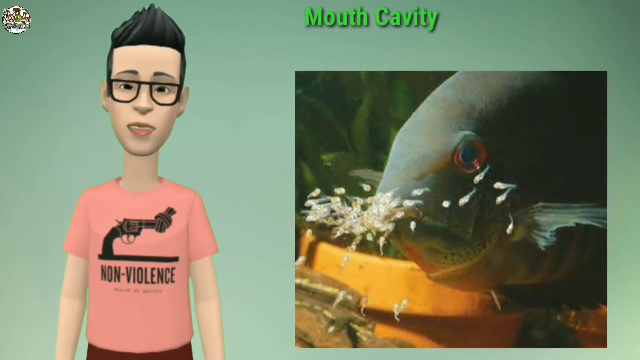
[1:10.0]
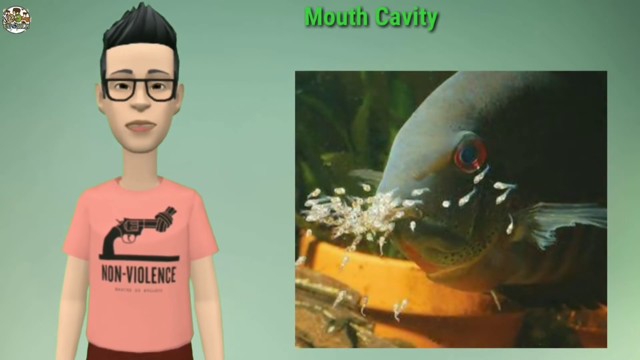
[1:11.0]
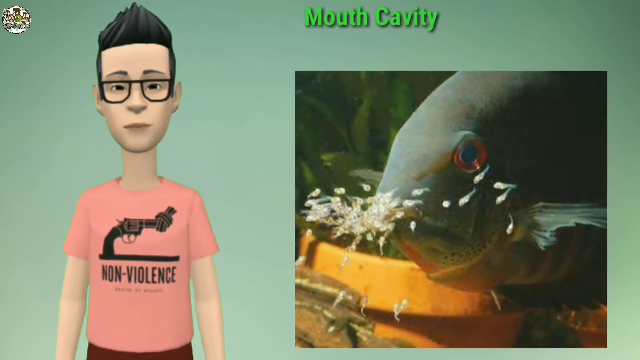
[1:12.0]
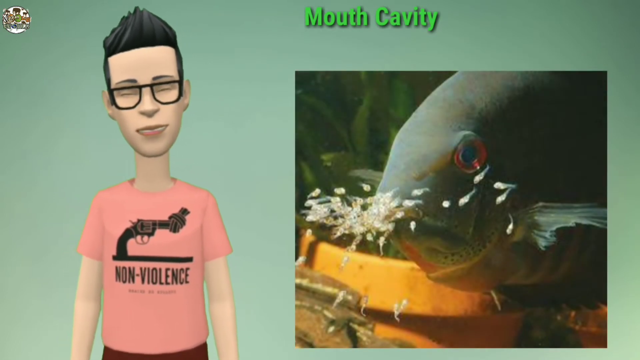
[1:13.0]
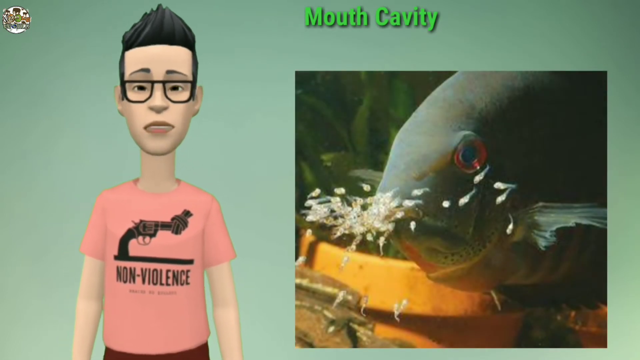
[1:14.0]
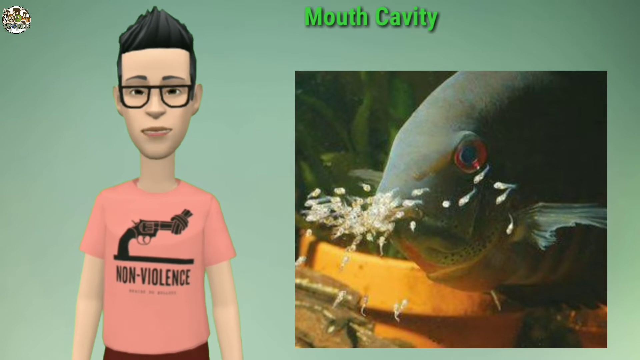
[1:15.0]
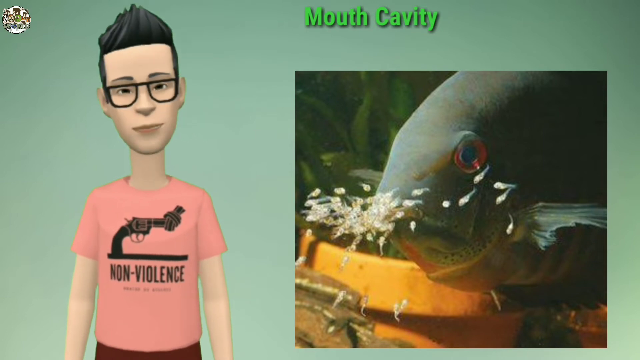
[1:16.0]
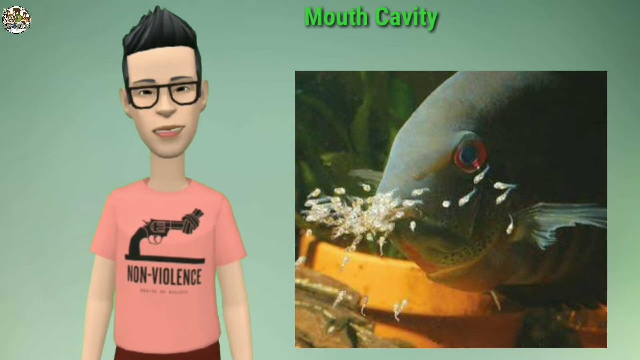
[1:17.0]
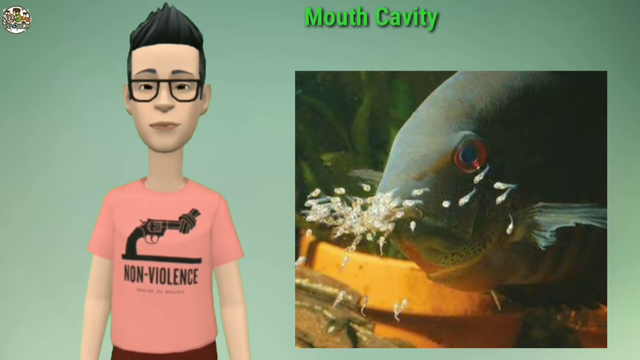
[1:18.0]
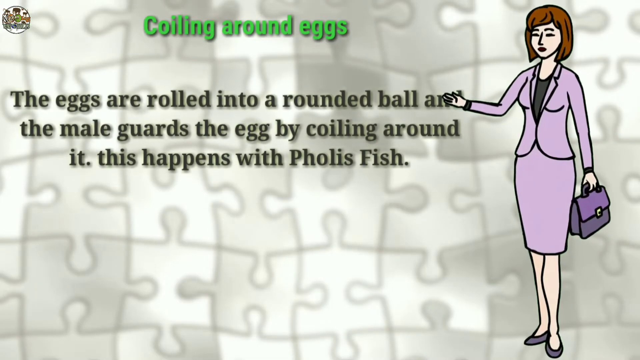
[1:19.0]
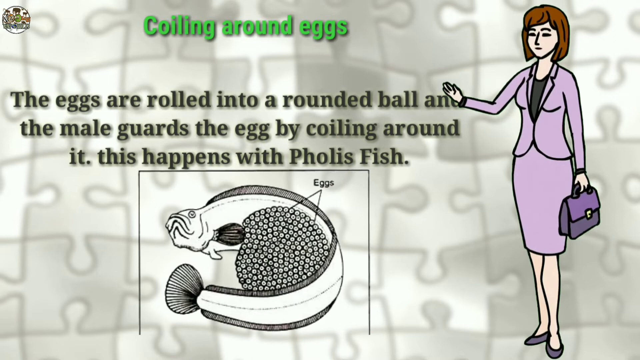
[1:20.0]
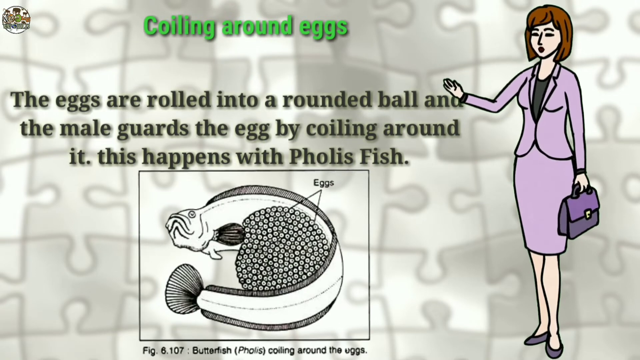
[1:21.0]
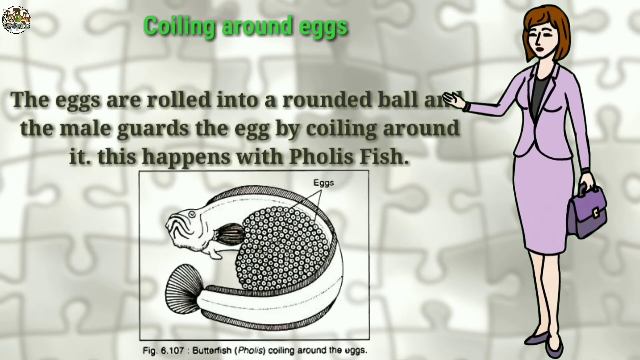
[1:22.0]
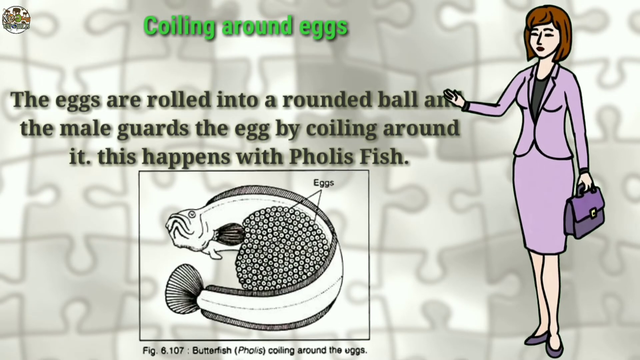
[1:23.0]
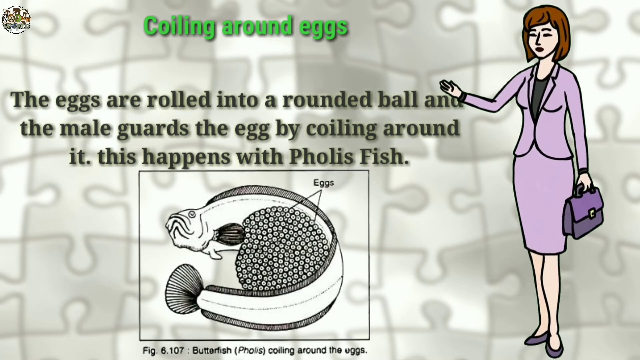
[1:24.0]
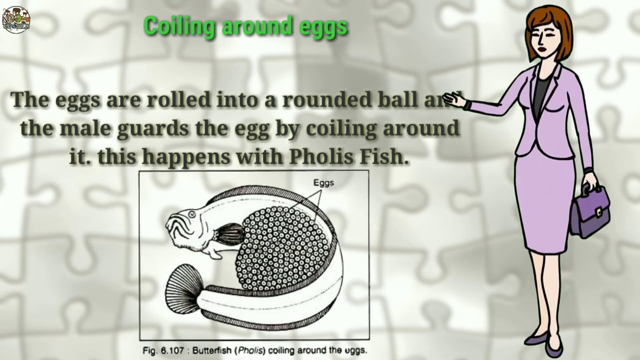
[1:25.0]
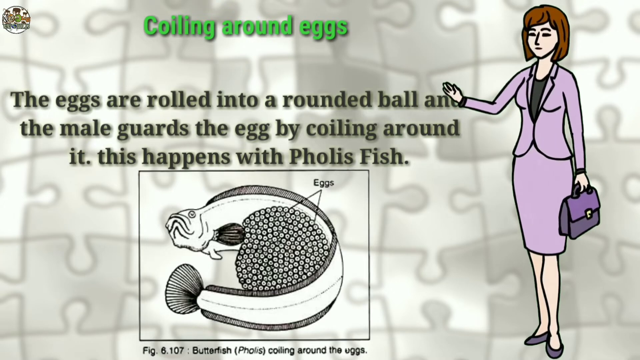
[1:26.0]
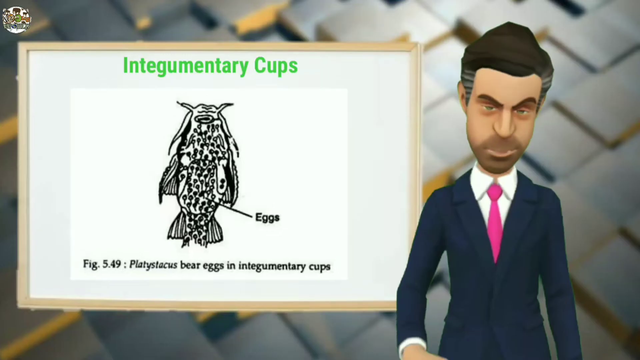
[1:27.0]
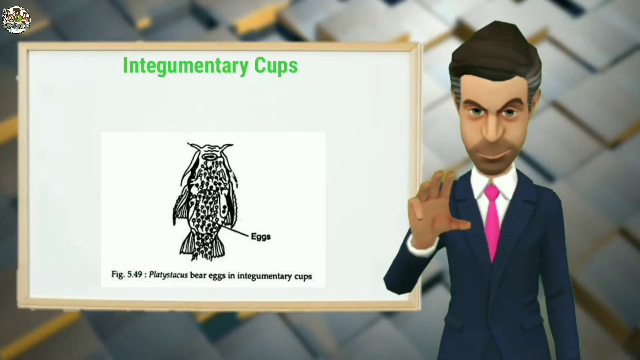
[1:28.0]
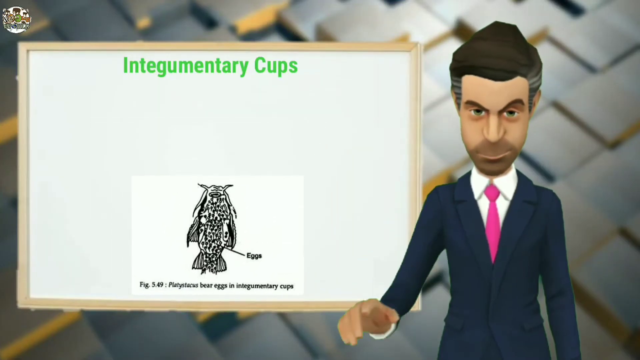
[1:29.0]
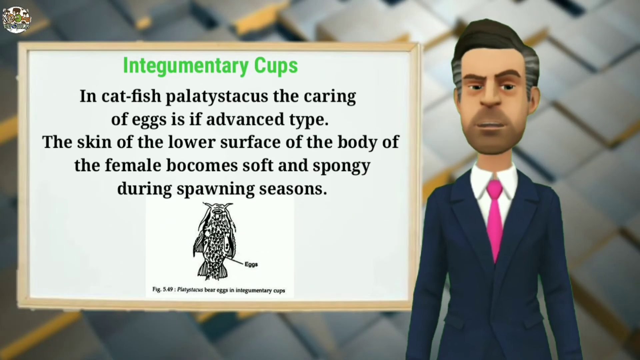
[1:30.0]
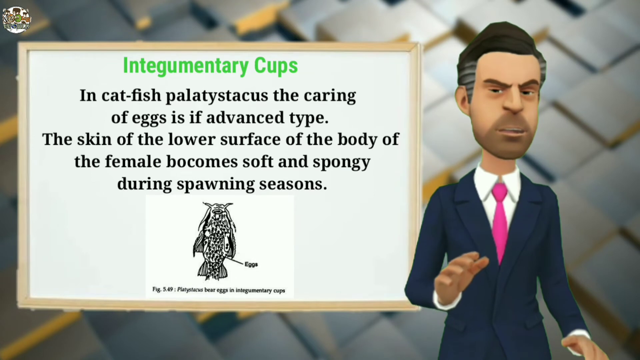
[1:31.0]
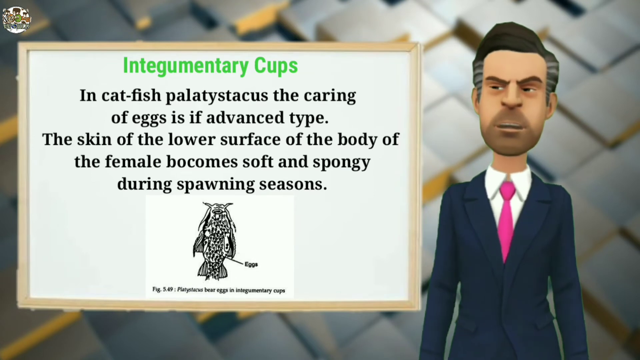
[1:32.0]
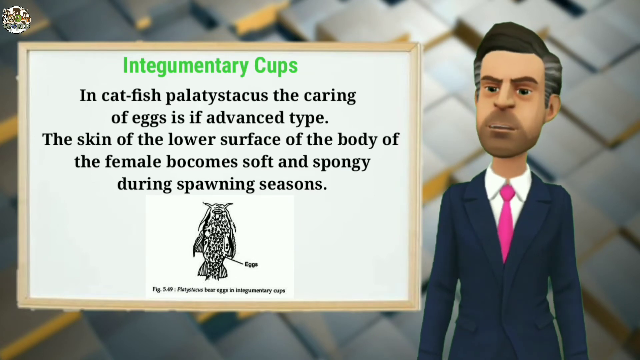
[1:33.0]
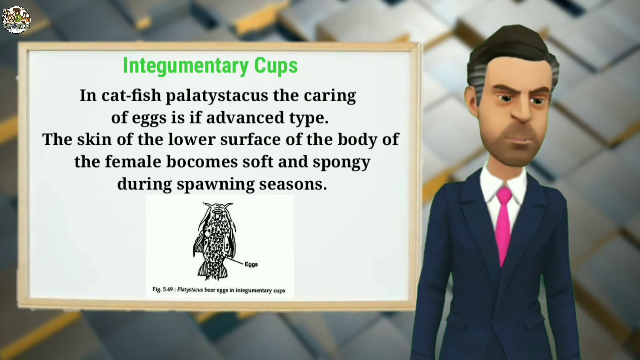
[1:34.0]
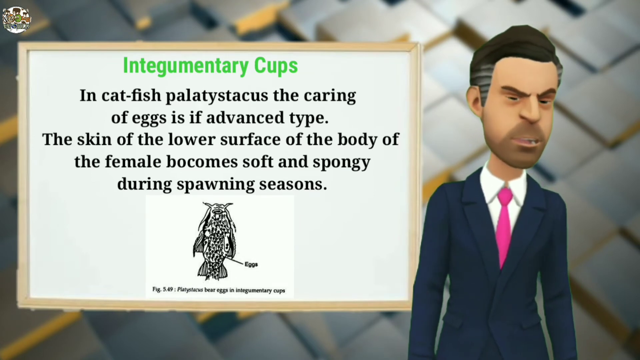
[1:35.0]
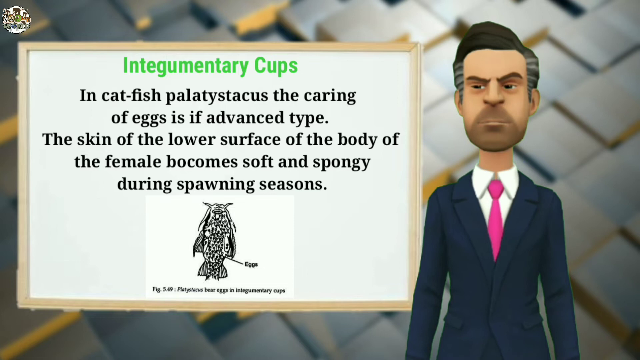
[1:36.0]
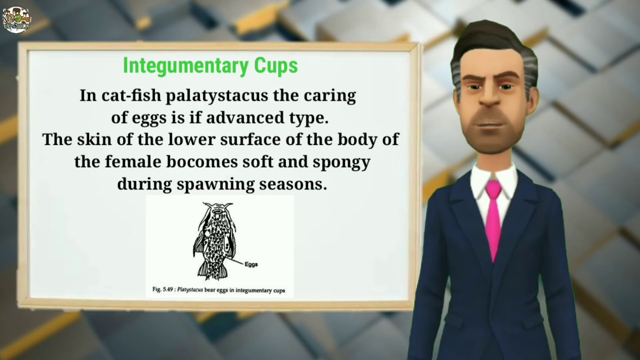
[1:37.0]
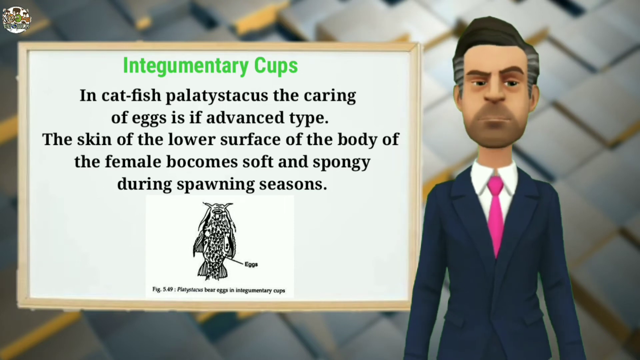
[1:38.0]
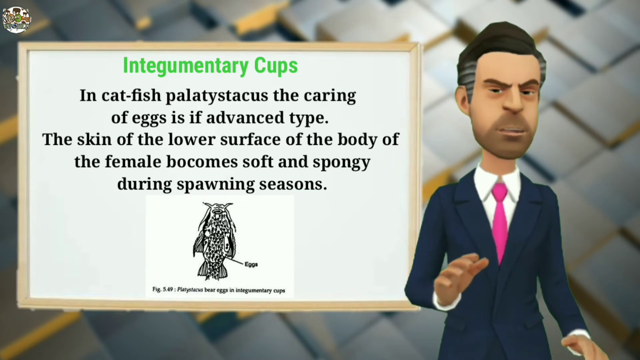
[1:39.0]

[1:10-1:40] The man in the pink shirt reading "non-violence" is shown; the shirt has a shotgun with a knot on the end of it. He wears glasses. A small zoology world logo is at the top. The mouth cavity of sunfishes is shown, with a close-up of a real-life fish. The character moves around and is more of a cartoon character, and seems to explain coiling around eggs. Next, a lady in a suit holding what appears to be a purse appears with information about the male guarding the eggs by coiling. Then a serious-looking man with a scruffy beard, wearing a suit, appears, with catfish as the topic. The video gives fun facts about fishes.